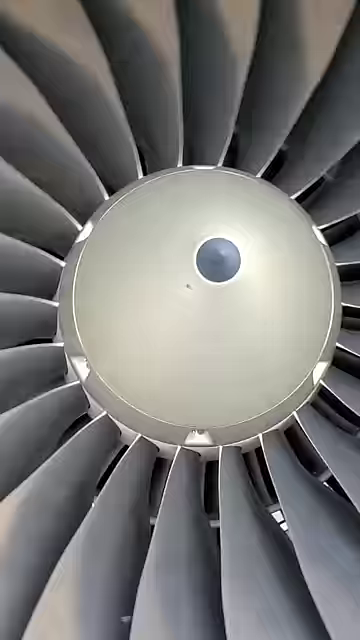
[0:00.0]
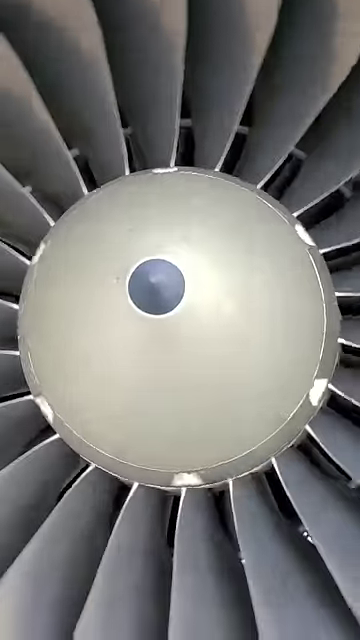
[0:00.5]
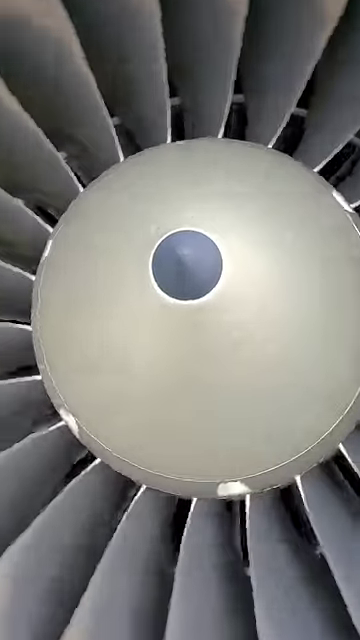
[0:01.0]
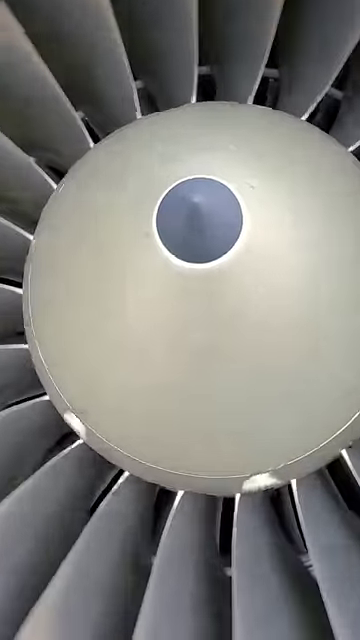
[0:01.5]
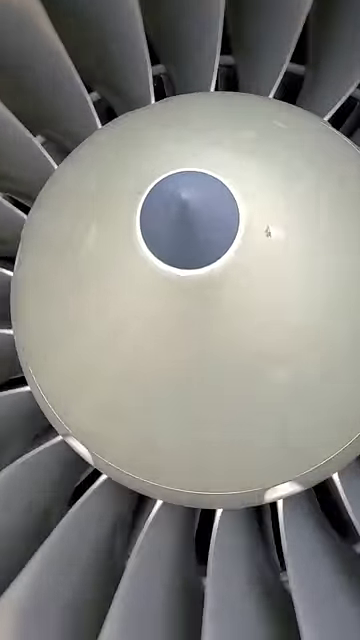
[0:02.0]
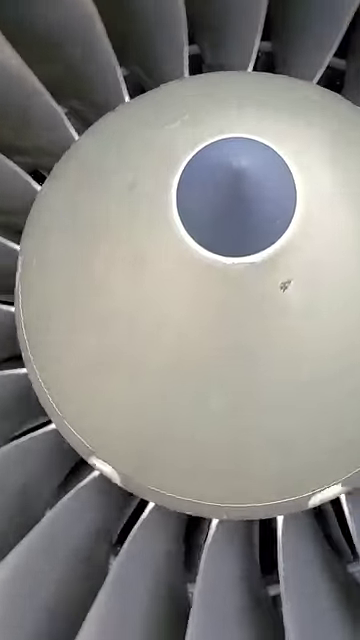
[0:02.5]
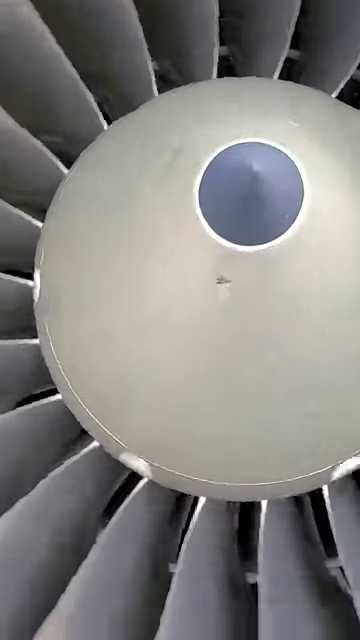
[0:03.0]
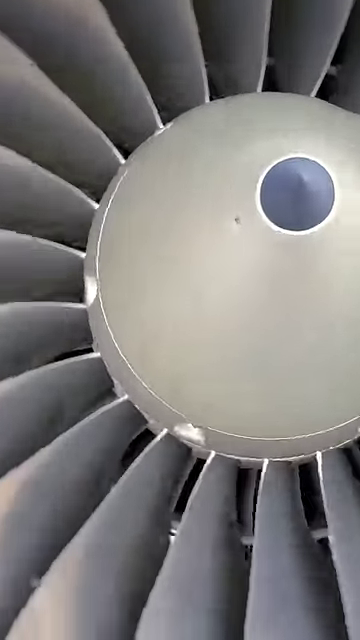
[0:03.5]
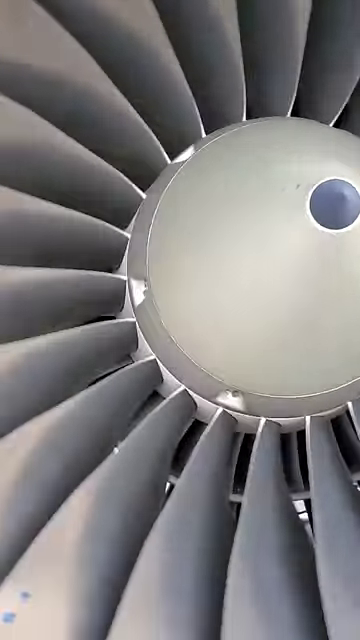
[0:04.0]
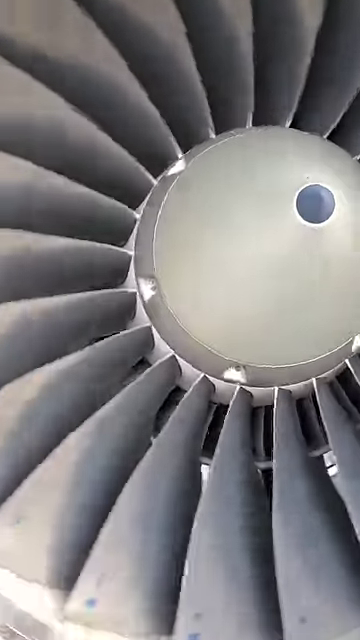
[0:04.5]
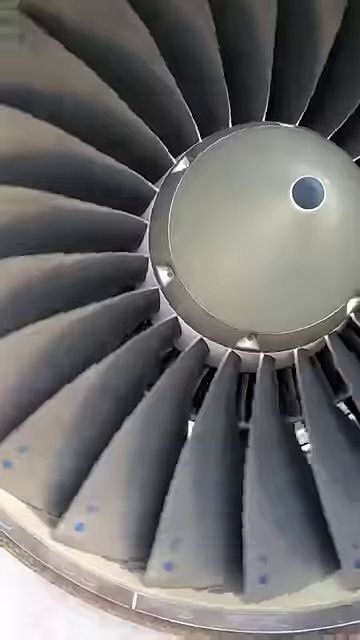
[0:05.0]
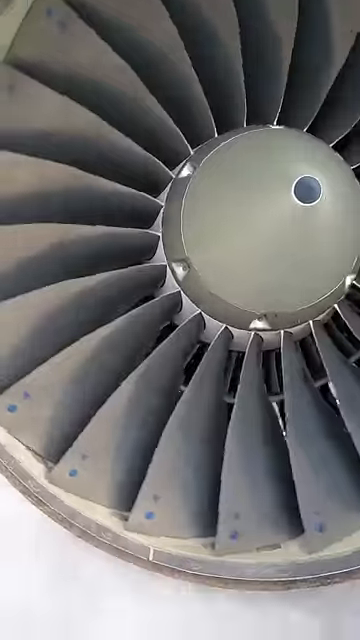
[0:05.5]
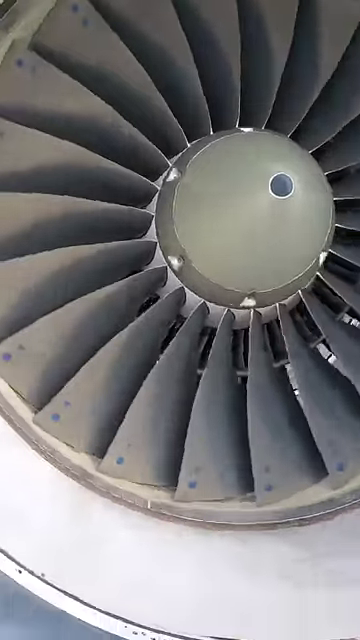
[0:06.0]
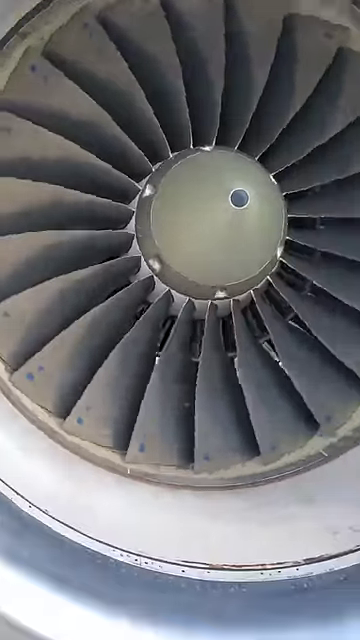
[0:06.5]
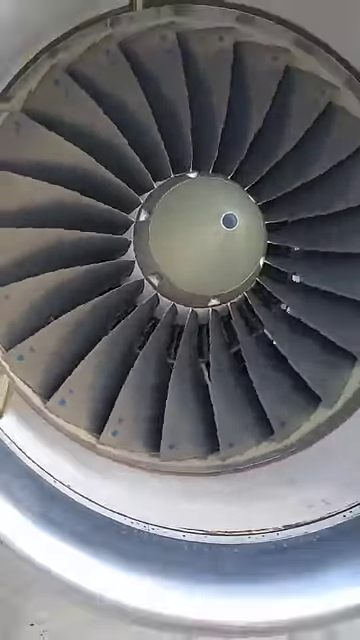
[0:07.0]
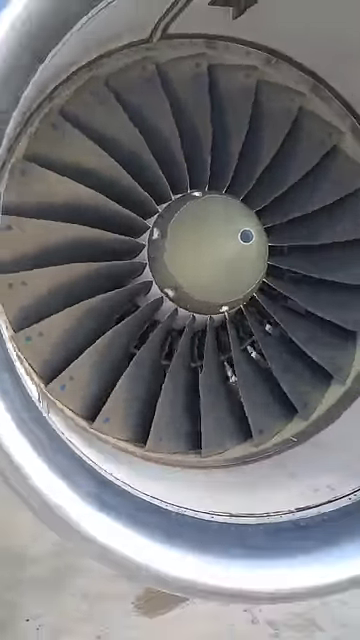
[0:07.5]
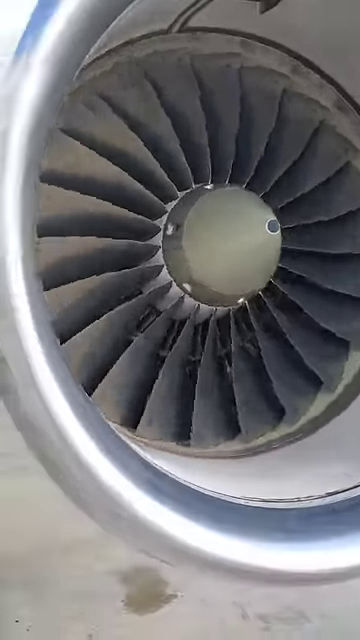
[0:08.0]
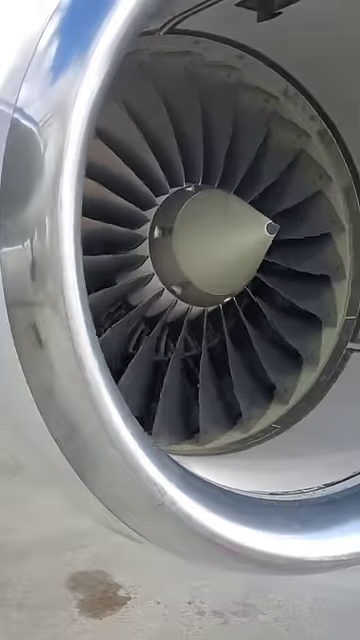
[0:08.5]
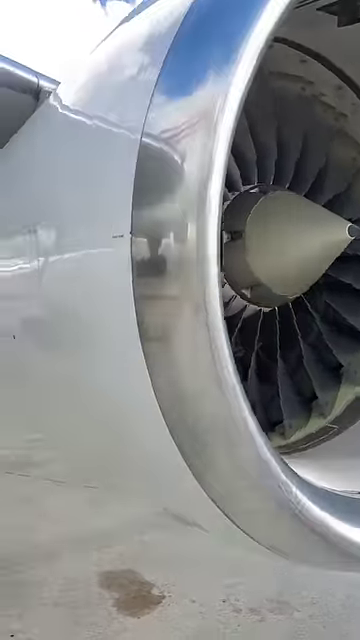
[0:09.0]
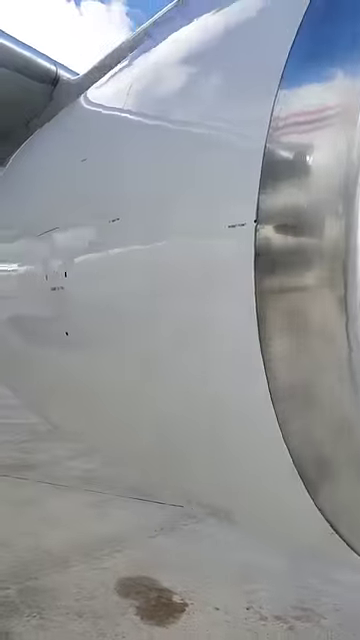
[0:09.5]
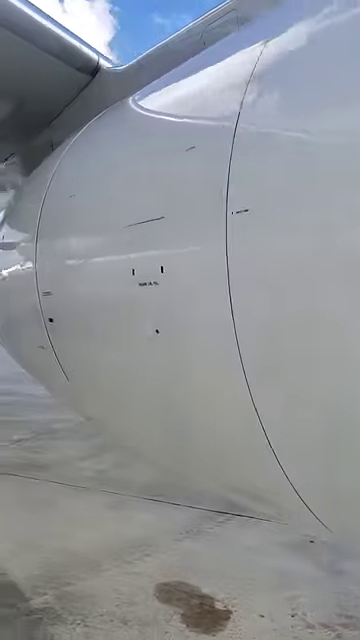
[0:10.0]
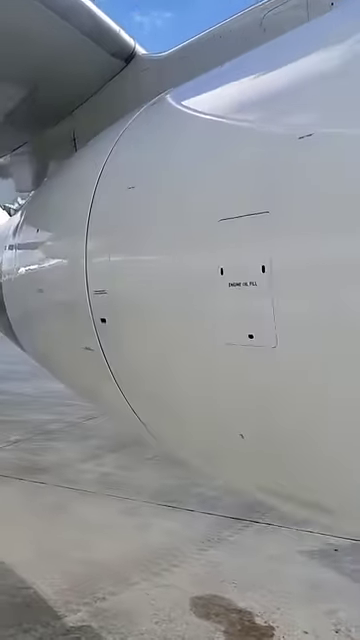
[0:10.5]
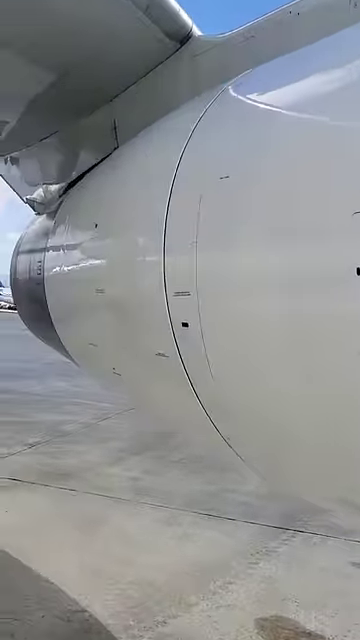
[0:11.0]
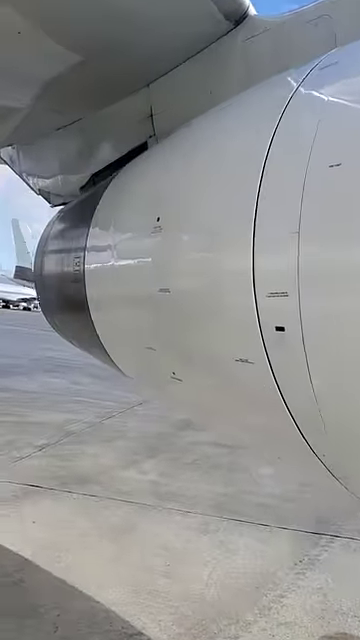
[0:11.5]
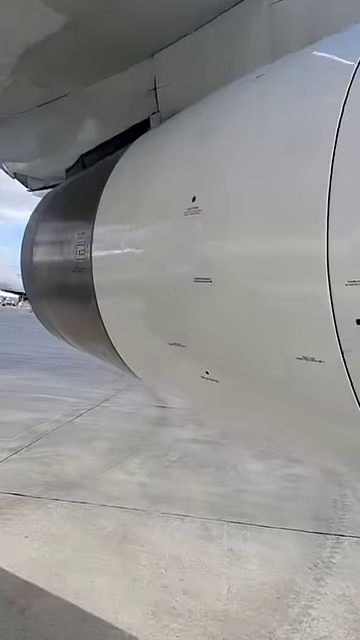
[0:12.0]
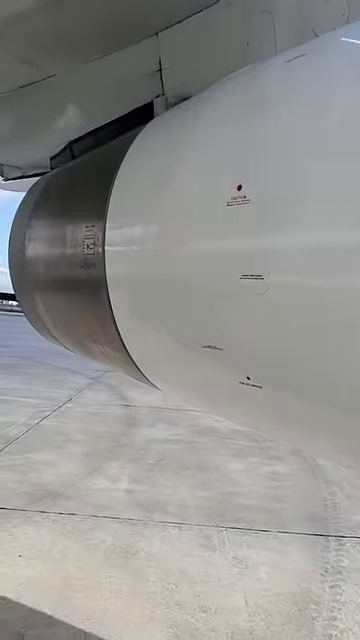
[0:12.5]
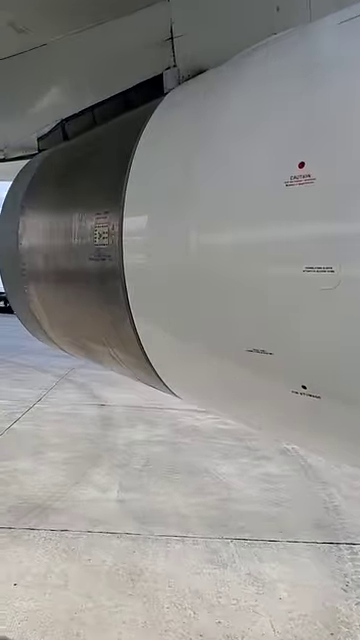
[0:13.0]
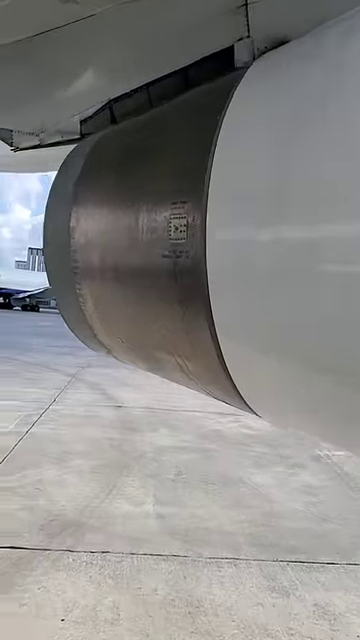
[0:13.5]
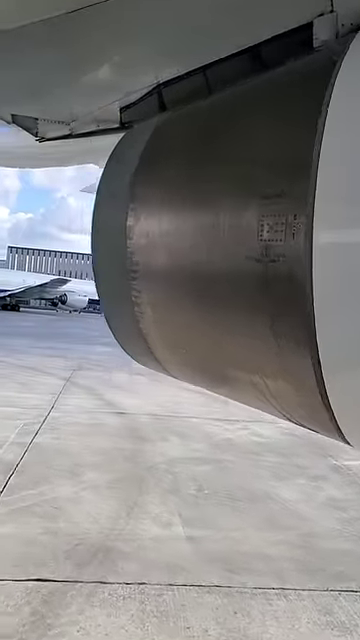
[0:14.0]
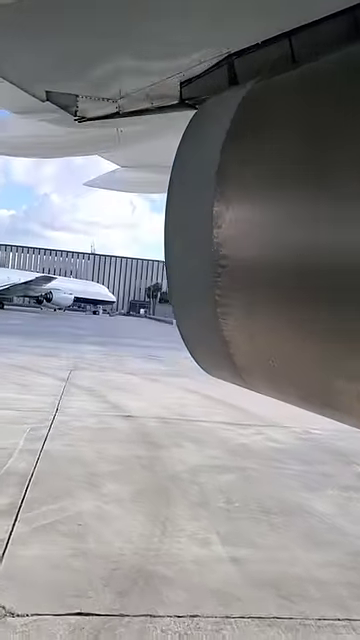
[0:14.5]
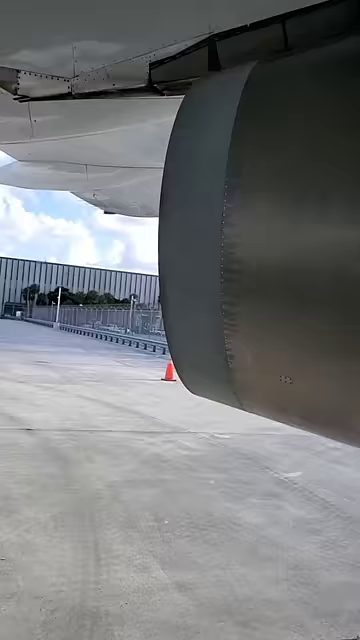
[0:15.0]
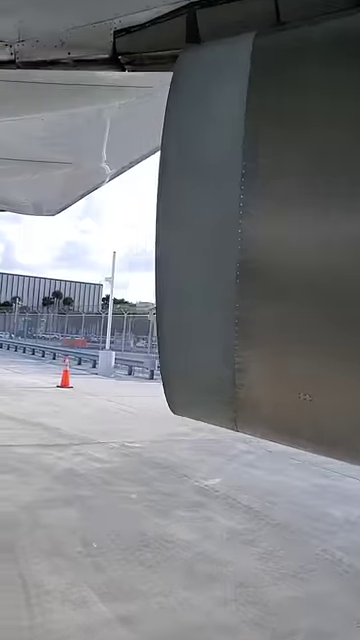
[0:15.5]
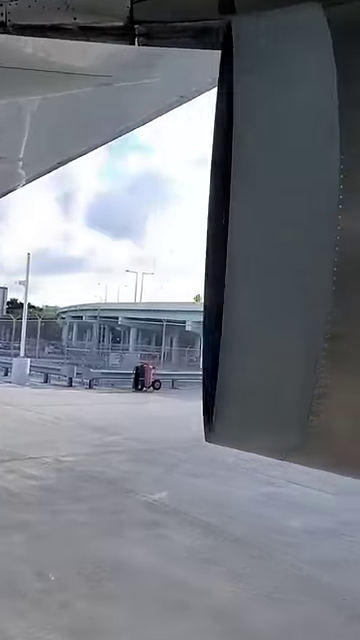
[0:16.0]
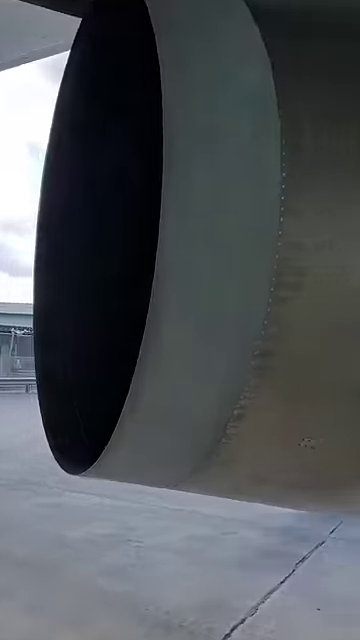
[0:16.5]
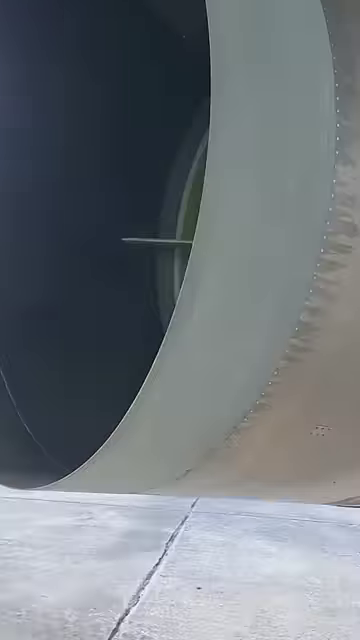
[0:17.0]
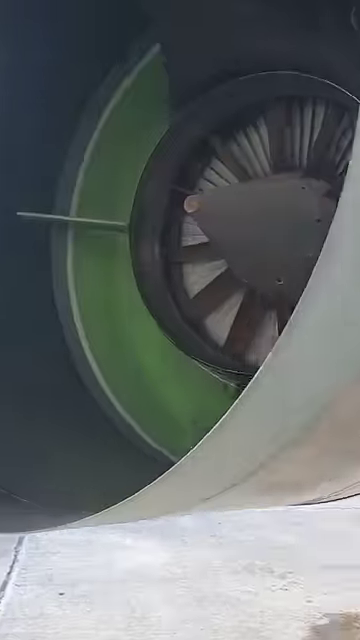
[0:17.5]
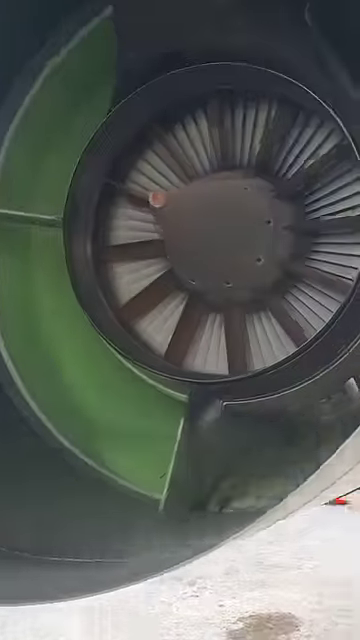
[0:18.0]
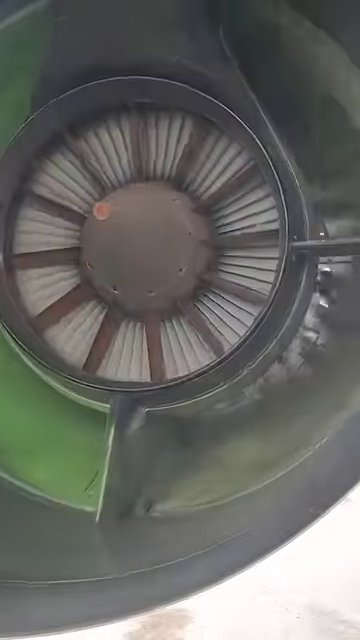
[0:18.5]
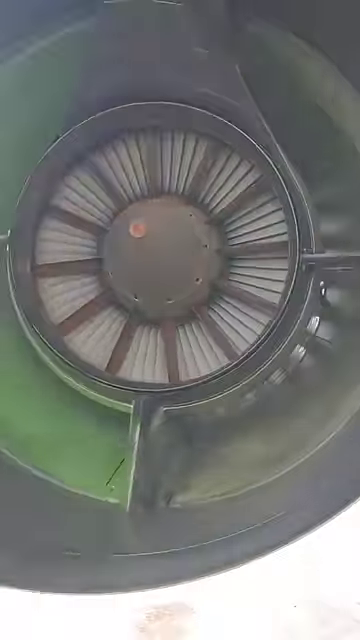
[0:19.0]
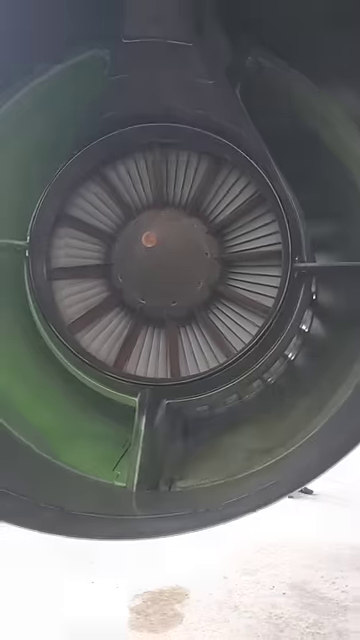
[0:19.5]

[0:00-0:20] A very close-up shot shows a turbo engine spinning around in circles. The camera pans out and moves toward the back of the engine, ending on a view from the back while the engine is still rotating. The plane looks to be white, with silver on its edges.